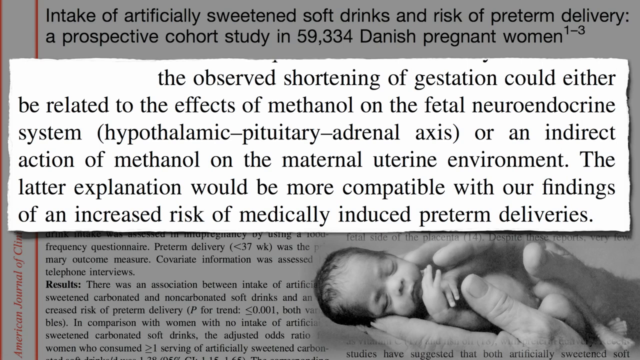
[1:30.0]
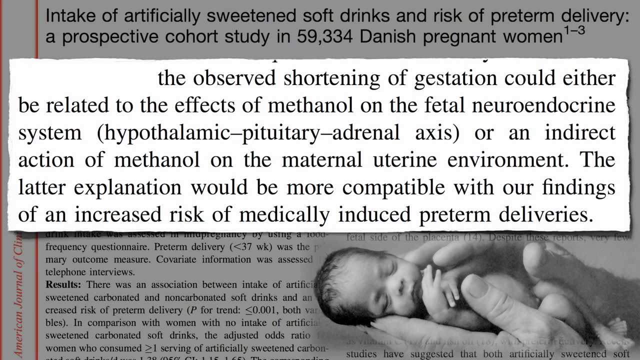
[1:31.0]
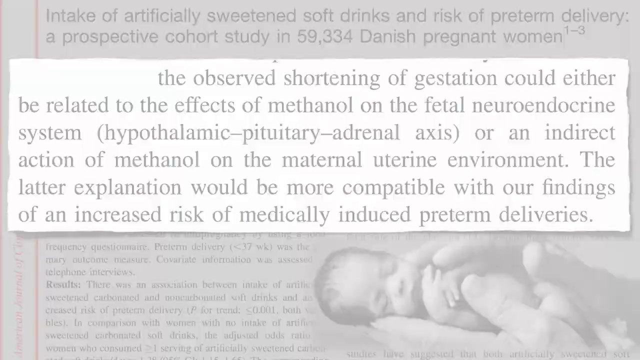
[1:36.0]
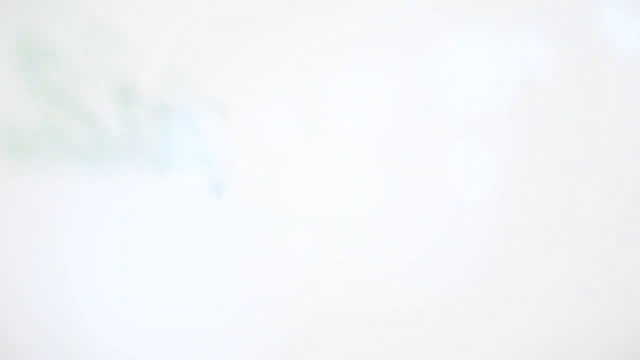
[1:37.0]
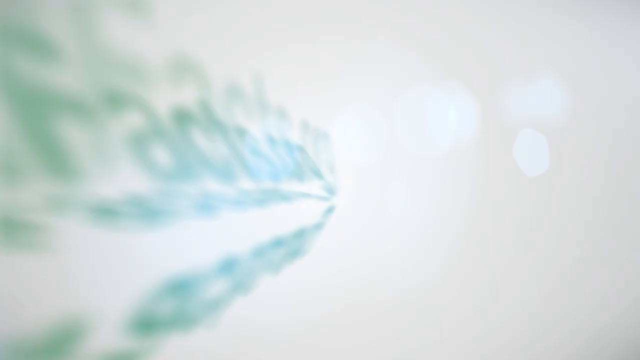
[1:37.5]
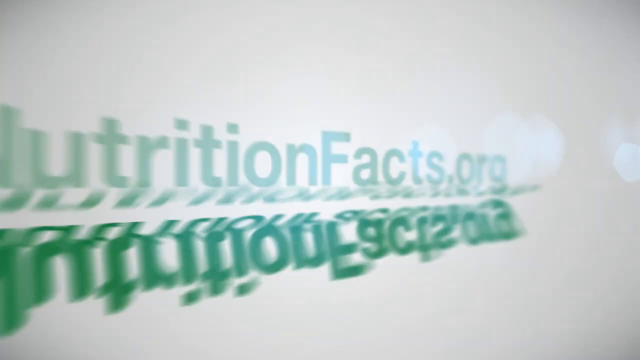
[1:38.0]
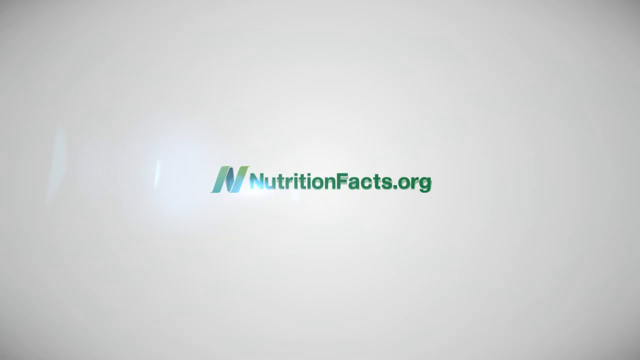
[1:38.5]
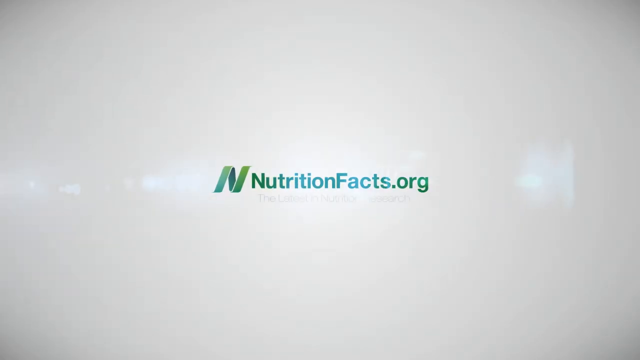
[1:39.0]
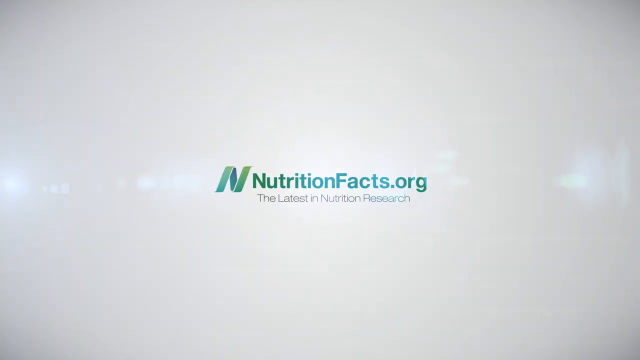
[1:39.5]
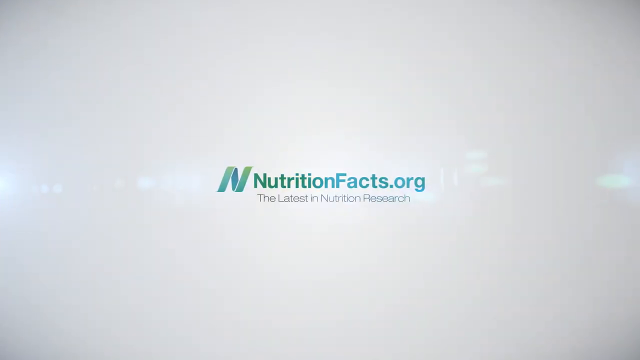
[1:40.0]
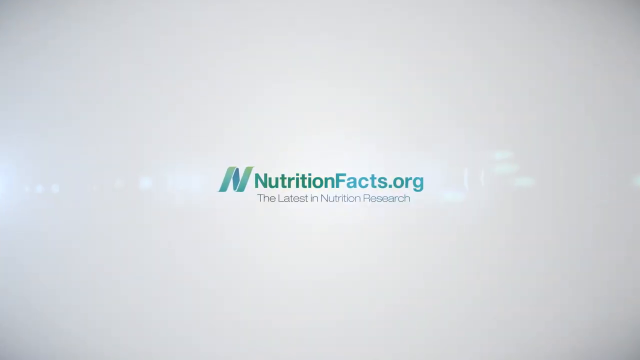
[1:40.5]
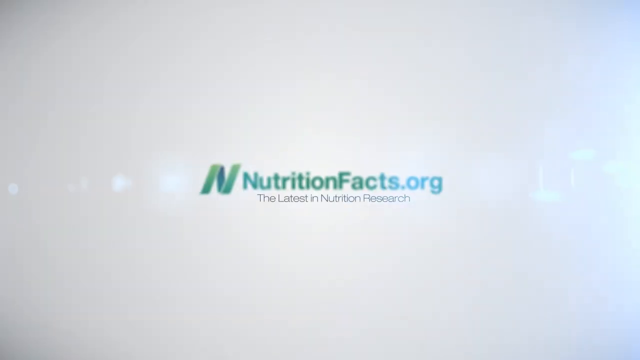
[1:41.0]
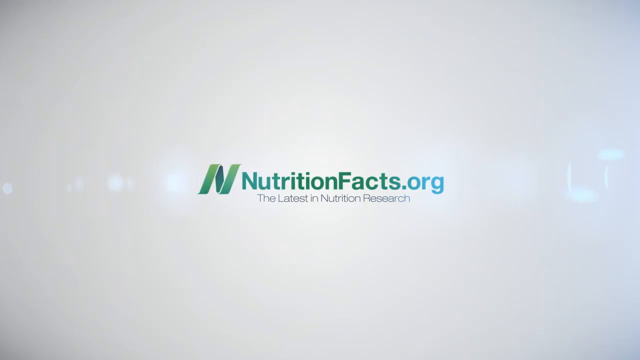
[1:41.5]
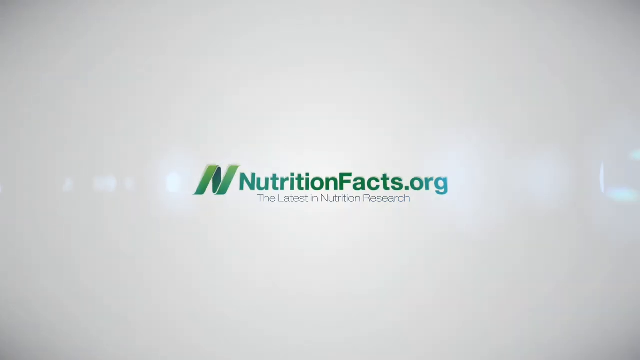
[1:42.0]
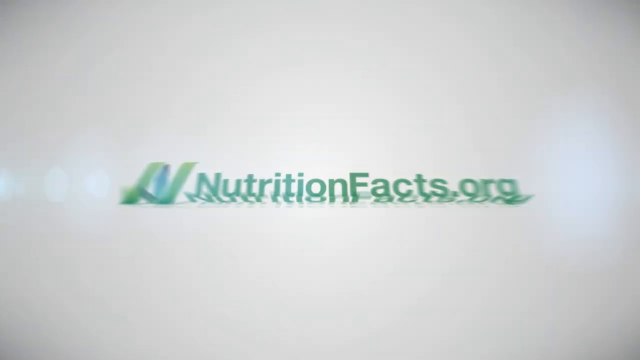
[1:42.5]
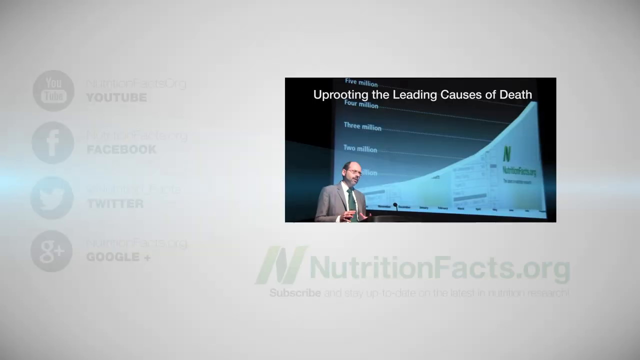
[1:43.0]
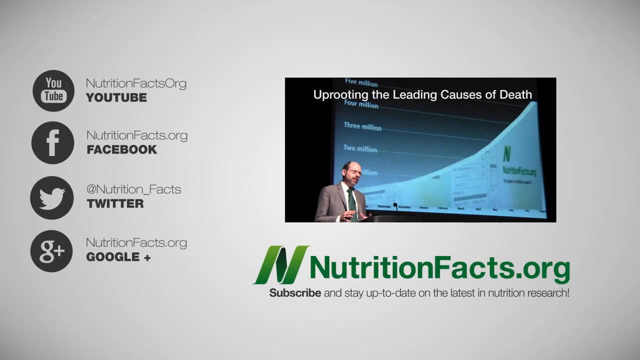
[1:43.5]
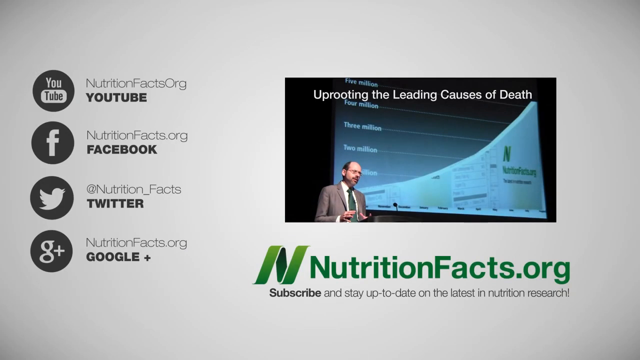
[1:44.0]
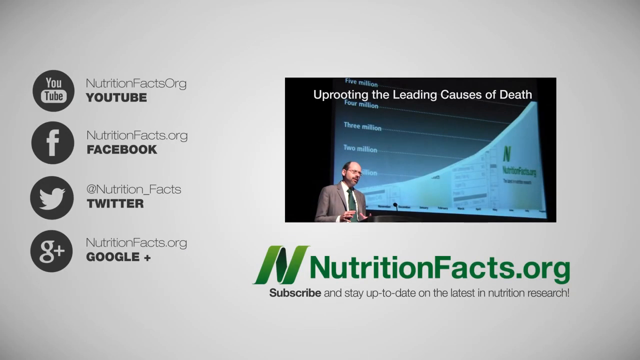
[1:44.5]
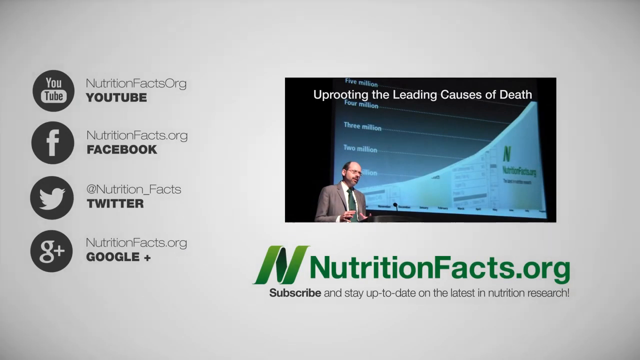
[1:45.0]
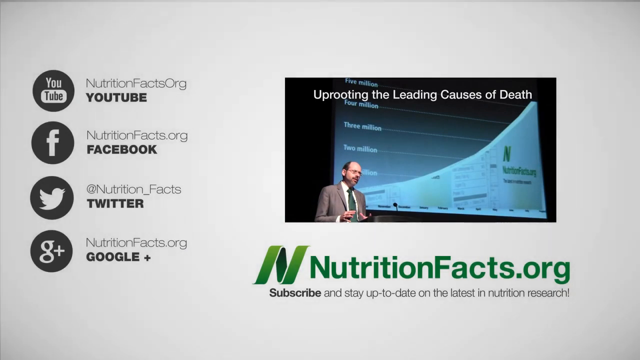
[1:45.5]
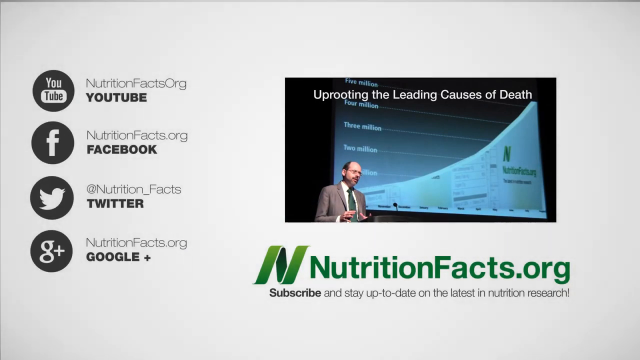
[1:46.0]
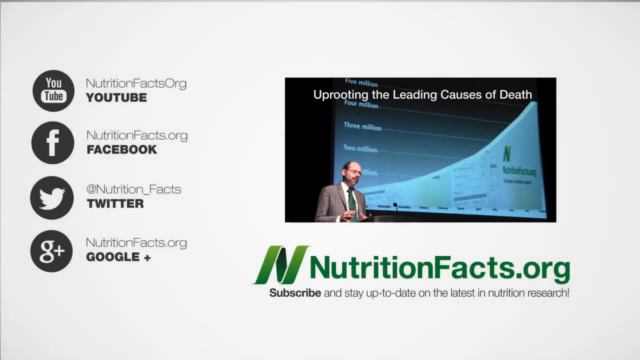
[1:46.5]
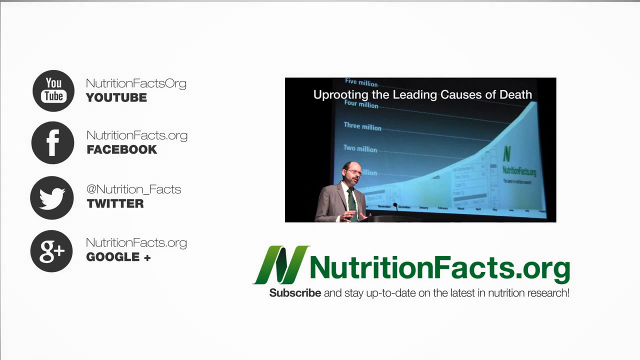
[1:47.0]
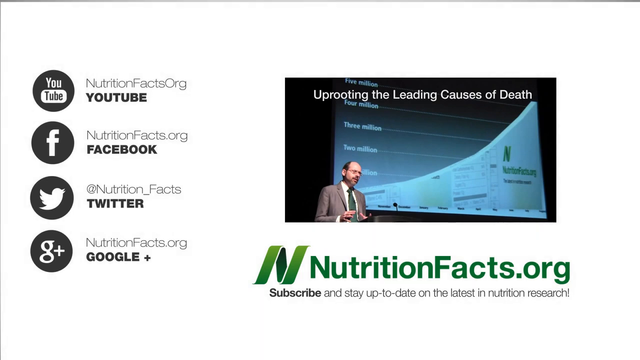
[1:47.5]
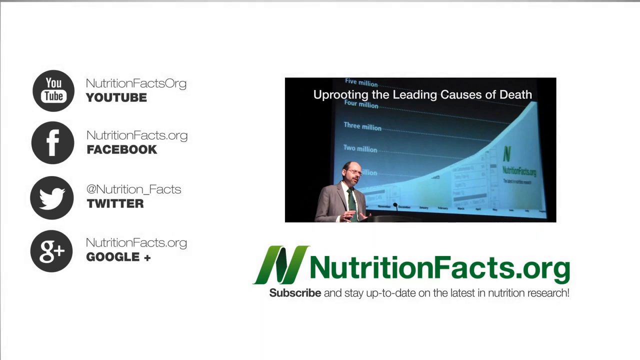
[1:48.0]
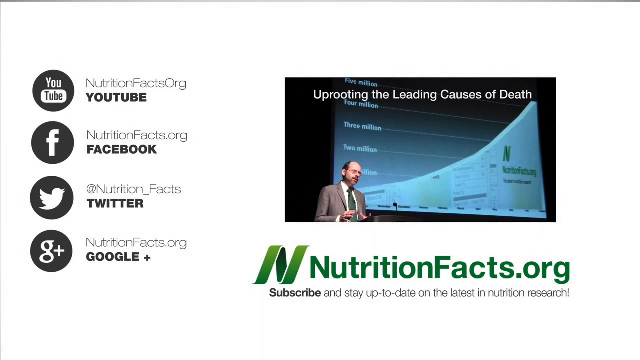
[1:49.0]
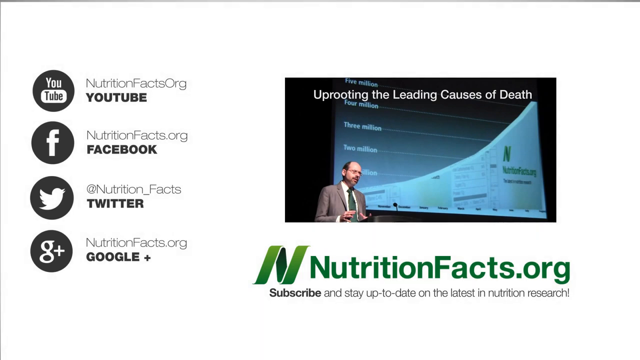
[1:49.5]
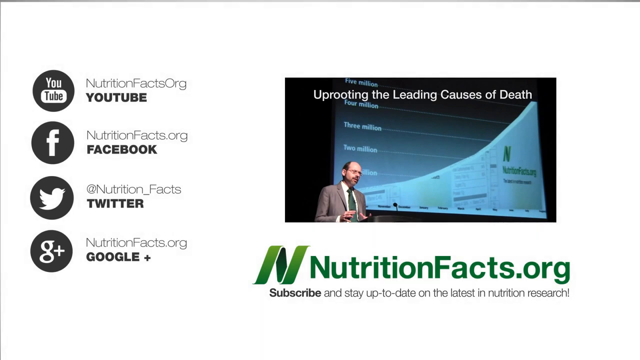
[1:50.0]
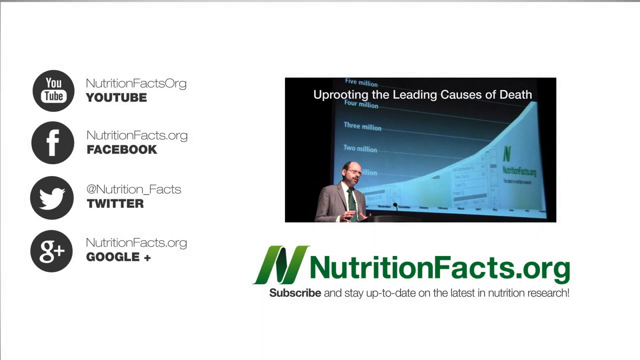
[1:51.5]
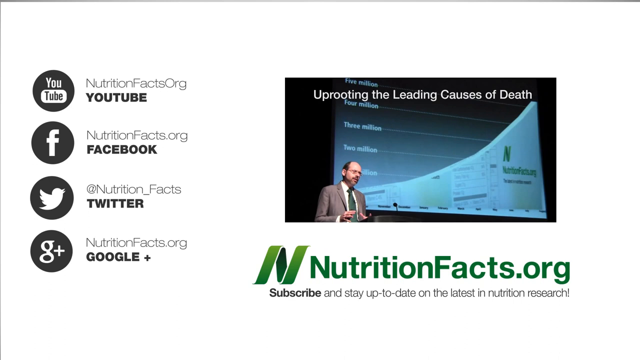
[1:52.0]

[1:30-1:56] The text about the observed shortening of gestation possibly being related to the effects of methanol on the fetal and/or endocrine system or indirect action of methanol on the maternal environment remains, over the same background. The information portion then ends, and a nutritionfacts.org screen appears with "the latest in nutrition research" and the same logo as at the beginning. The final slide shows the logo with a suggested next video to watch. Below that is the nutritionfacts.org logo again, and to its left are links to nutritionfacts.org on social media: YouTube, Facebook, Twitter and Google.